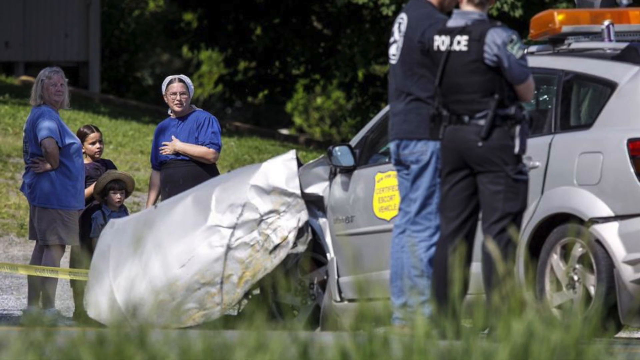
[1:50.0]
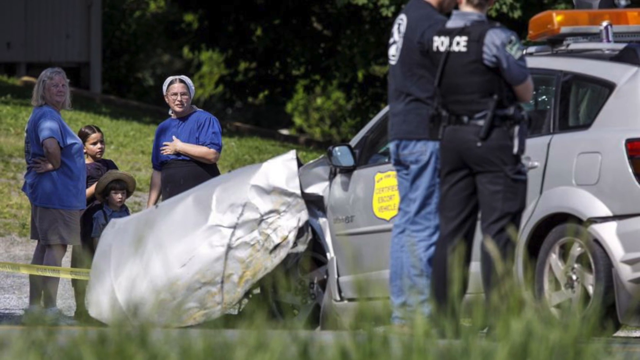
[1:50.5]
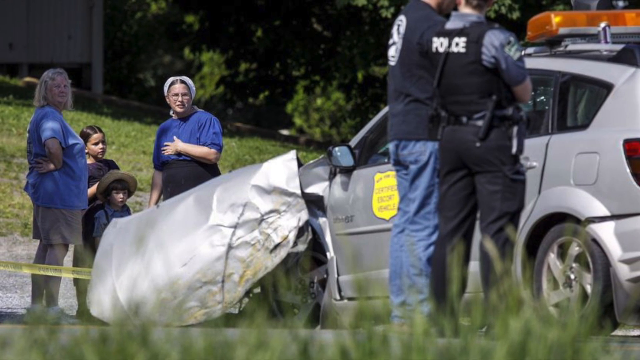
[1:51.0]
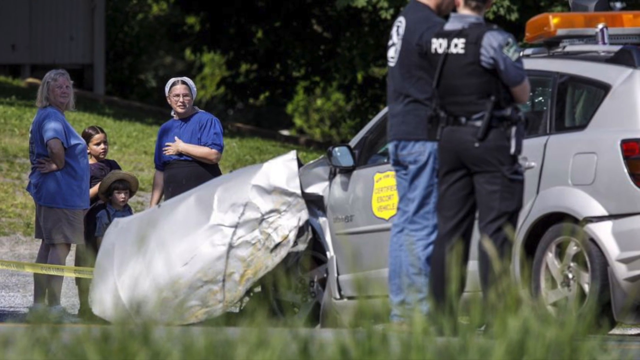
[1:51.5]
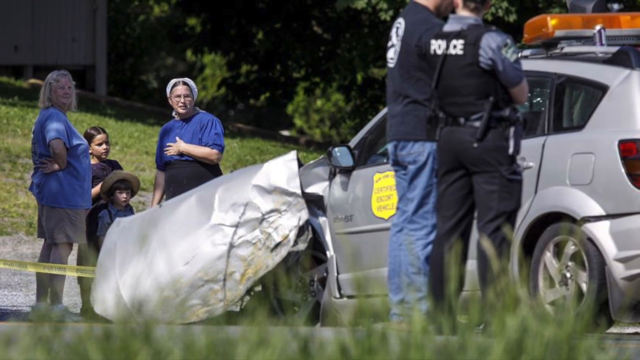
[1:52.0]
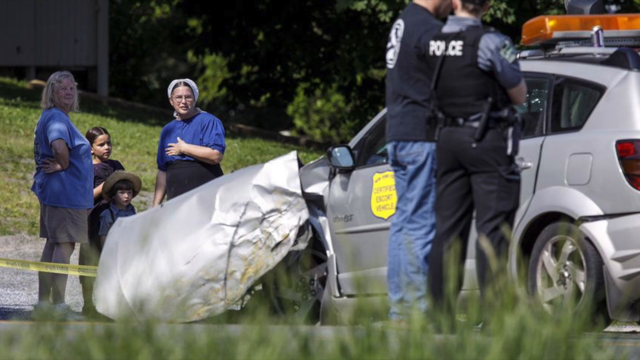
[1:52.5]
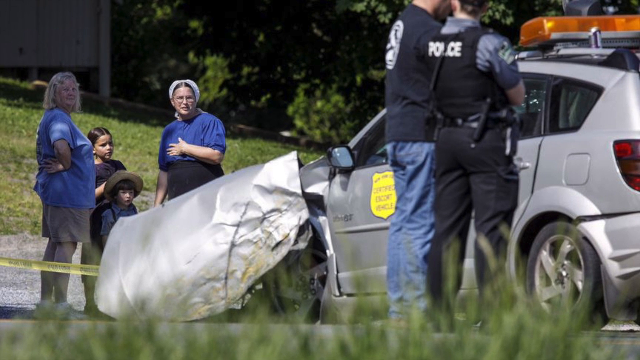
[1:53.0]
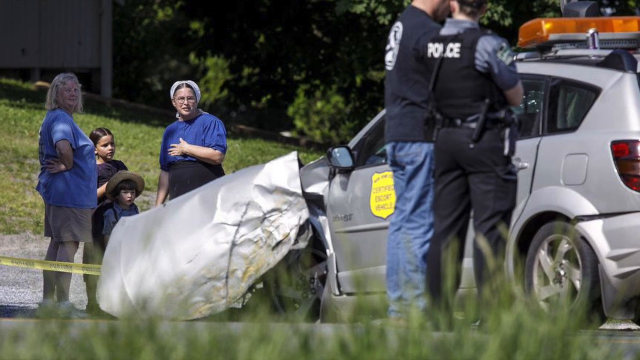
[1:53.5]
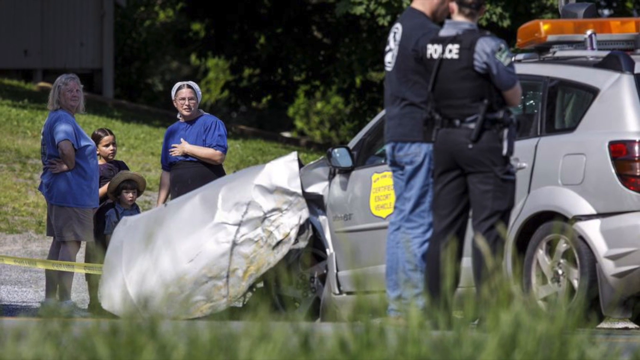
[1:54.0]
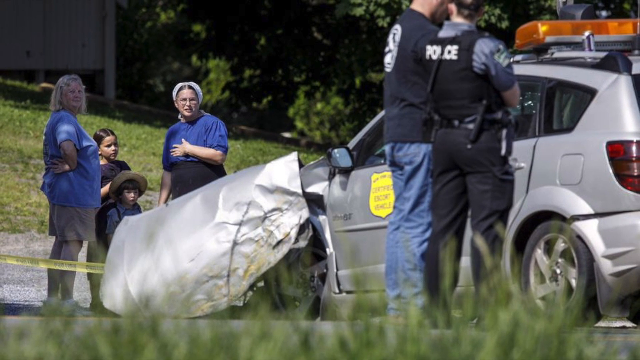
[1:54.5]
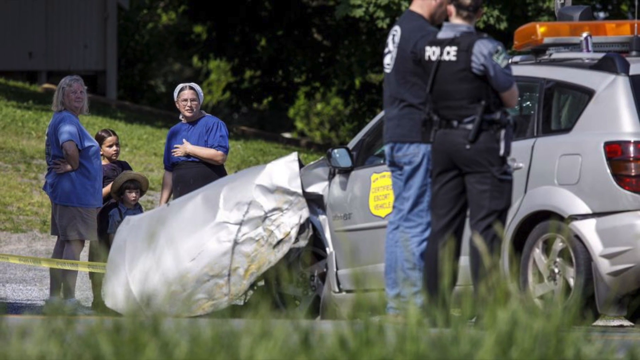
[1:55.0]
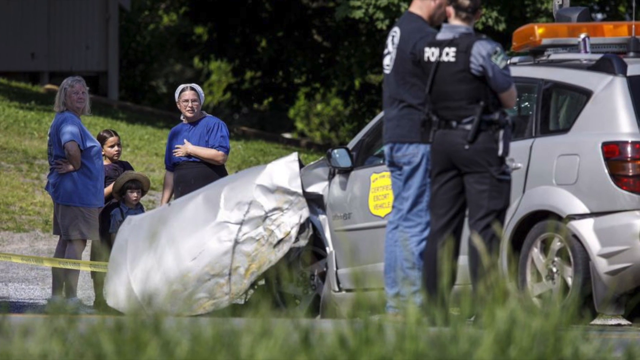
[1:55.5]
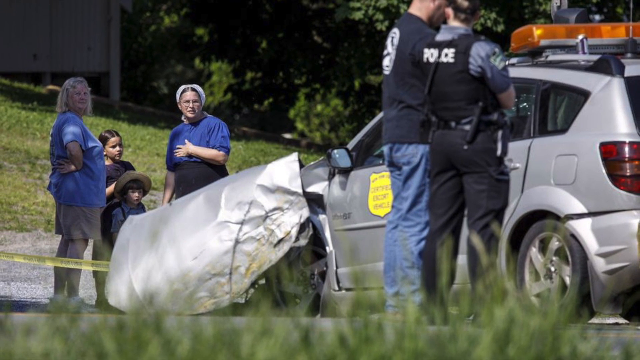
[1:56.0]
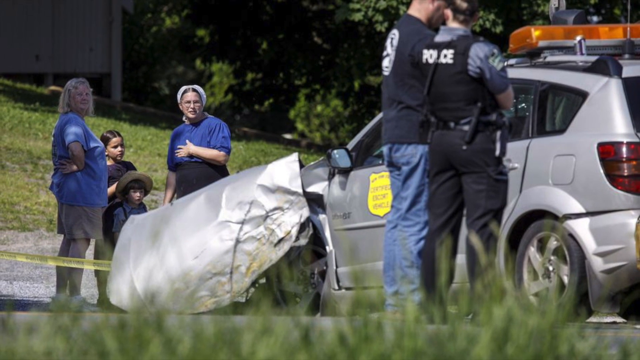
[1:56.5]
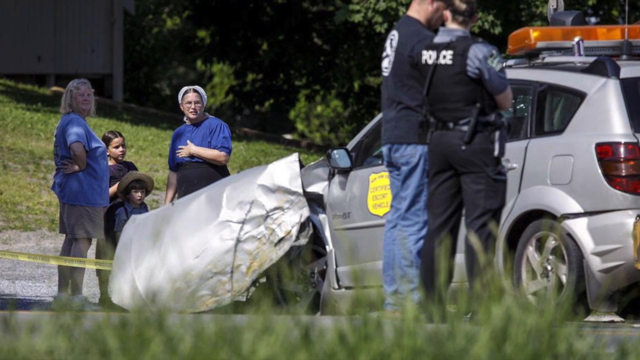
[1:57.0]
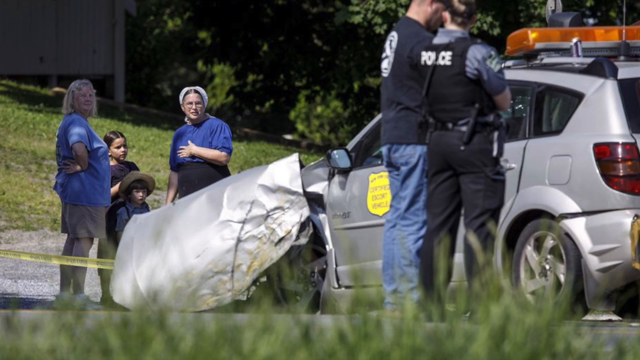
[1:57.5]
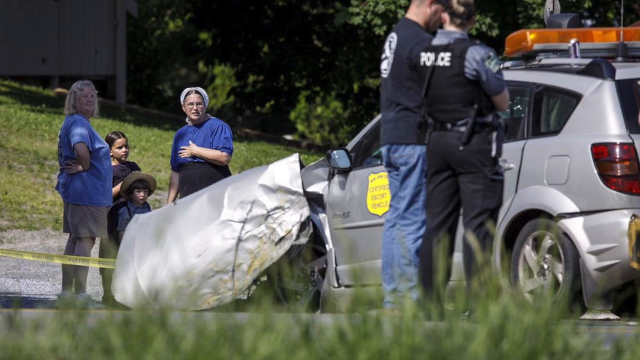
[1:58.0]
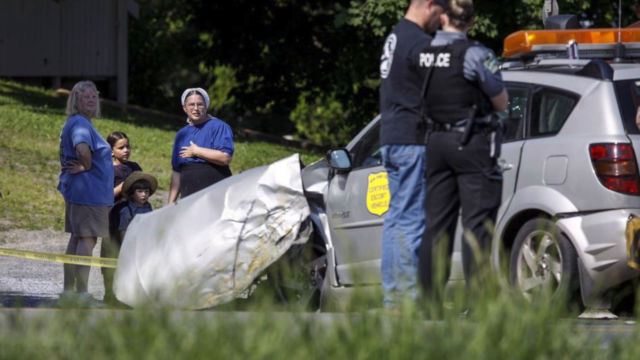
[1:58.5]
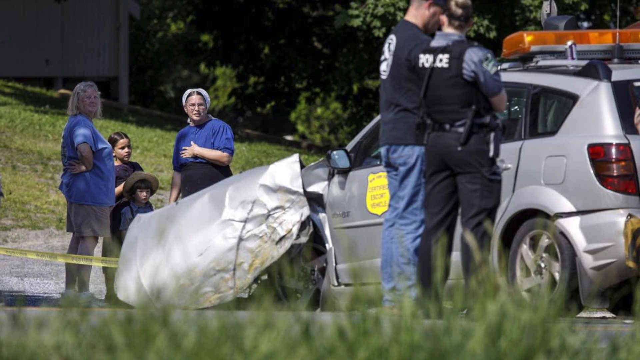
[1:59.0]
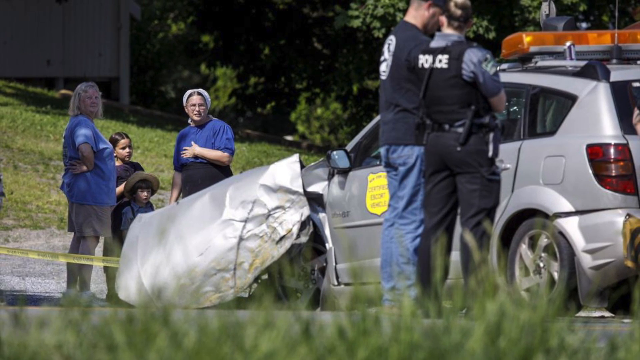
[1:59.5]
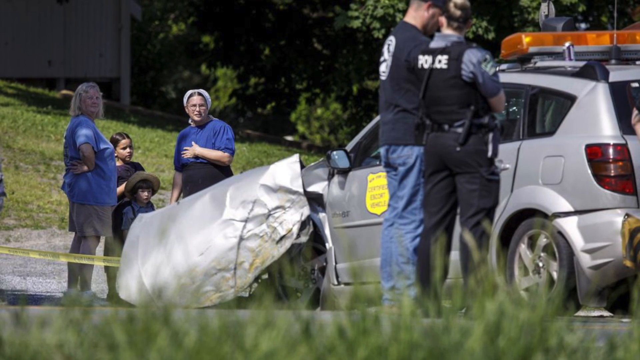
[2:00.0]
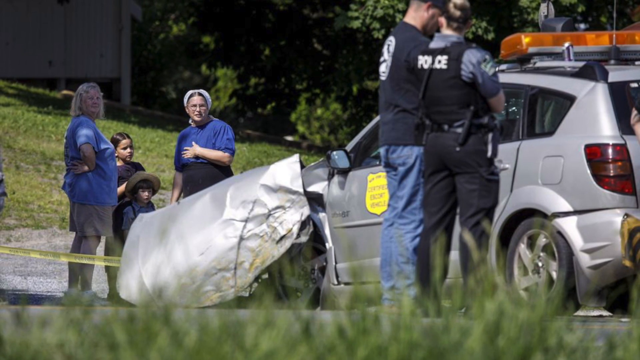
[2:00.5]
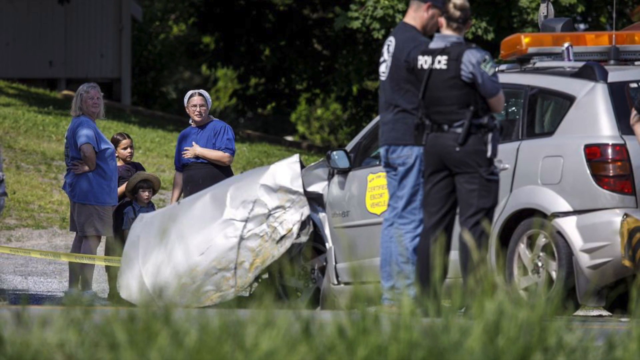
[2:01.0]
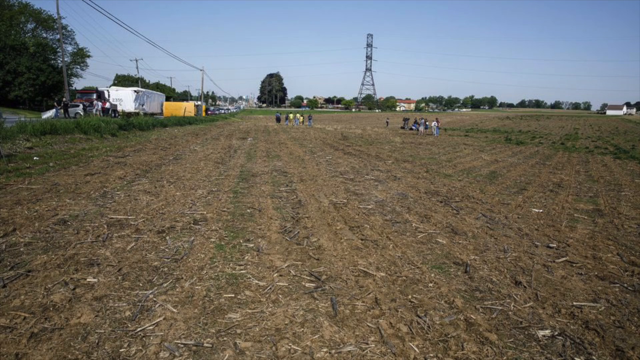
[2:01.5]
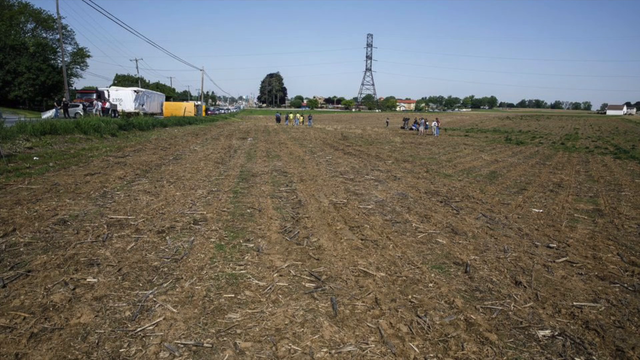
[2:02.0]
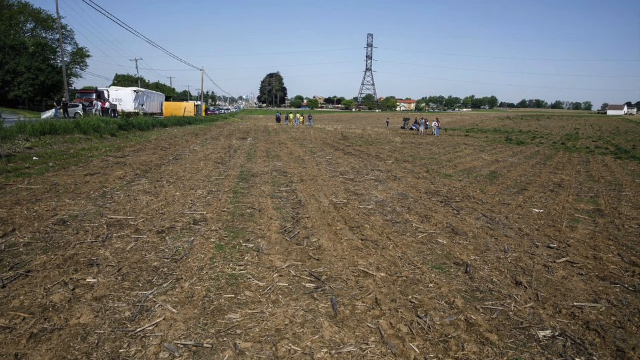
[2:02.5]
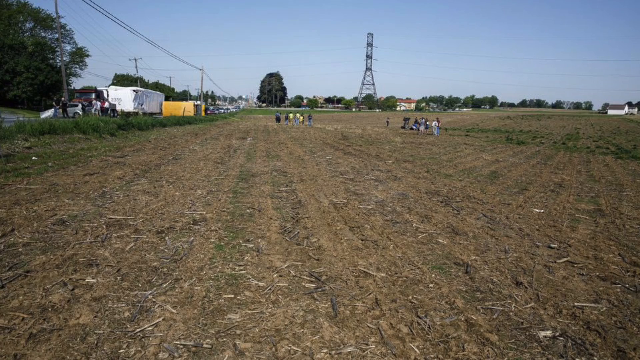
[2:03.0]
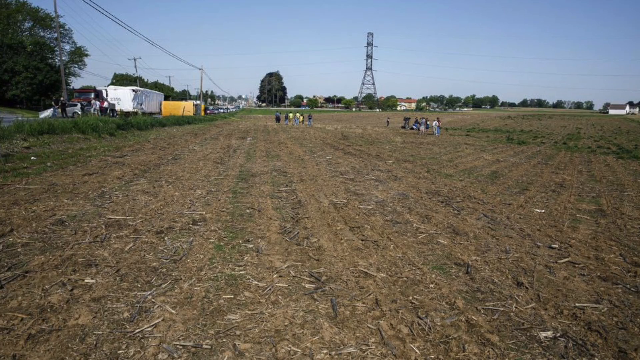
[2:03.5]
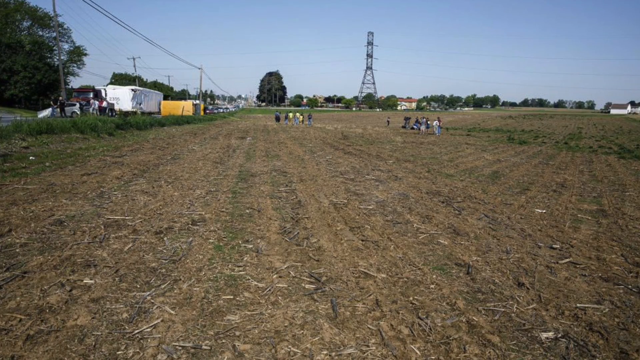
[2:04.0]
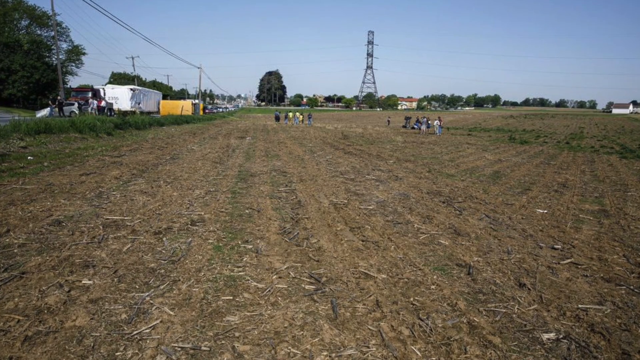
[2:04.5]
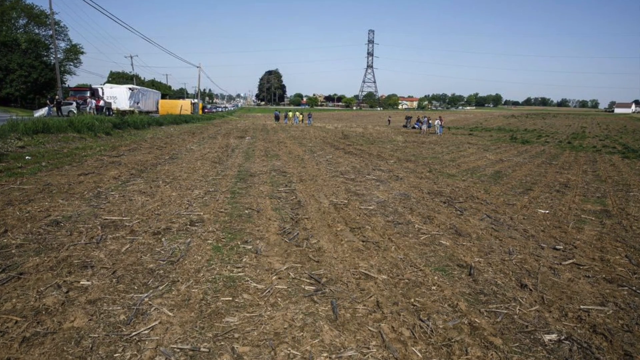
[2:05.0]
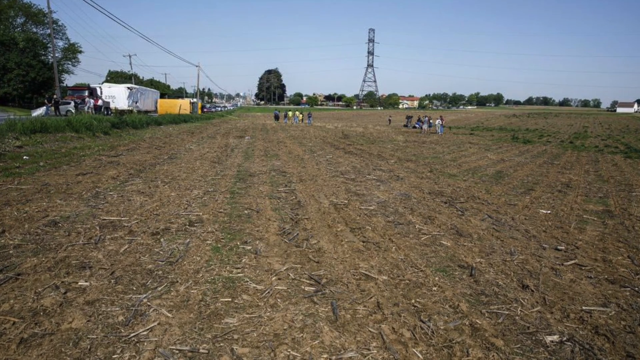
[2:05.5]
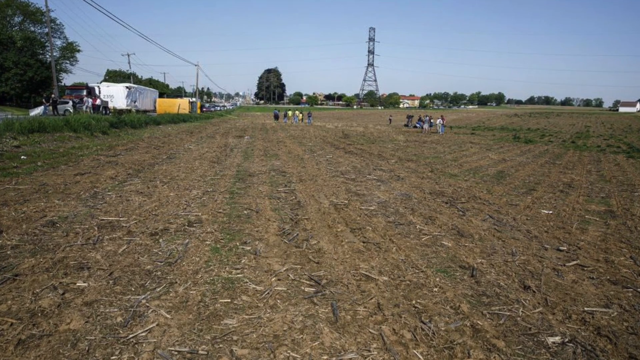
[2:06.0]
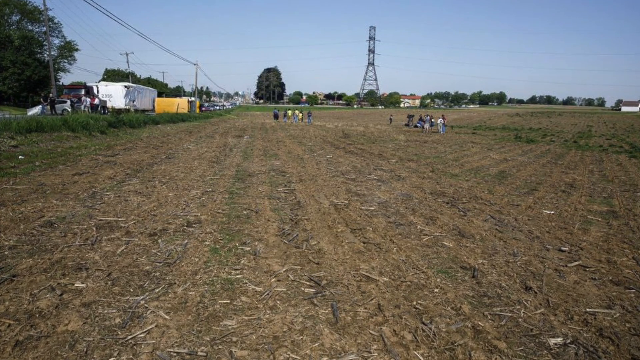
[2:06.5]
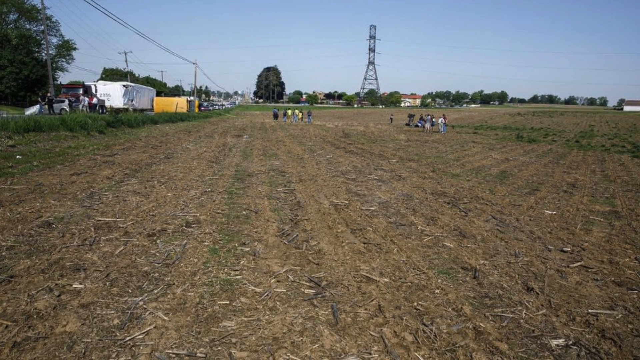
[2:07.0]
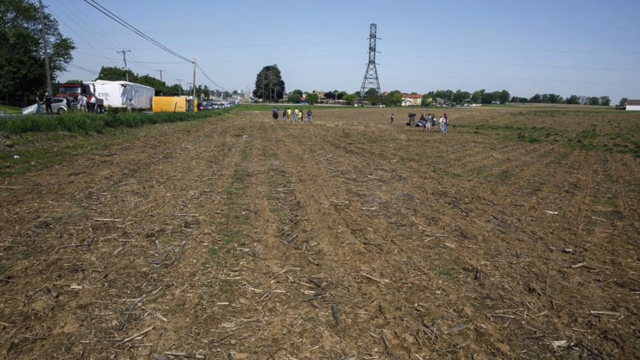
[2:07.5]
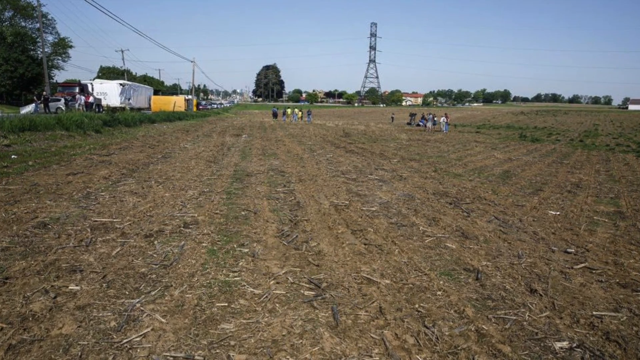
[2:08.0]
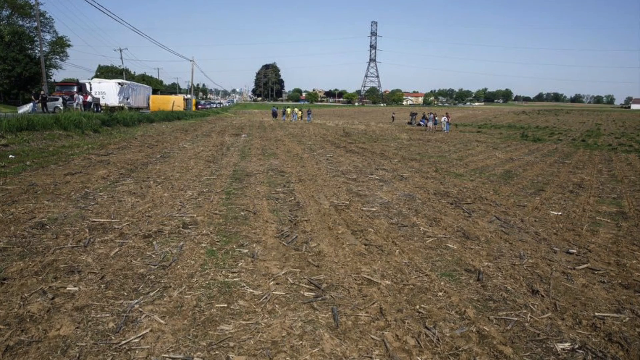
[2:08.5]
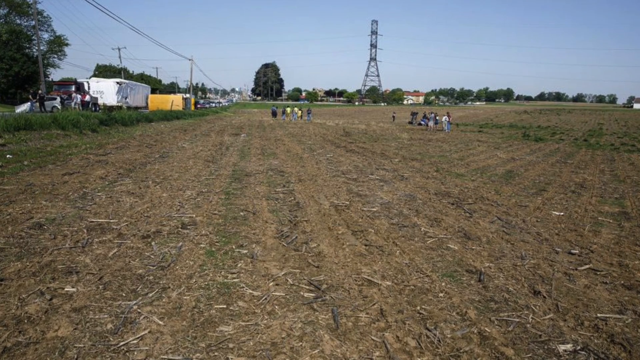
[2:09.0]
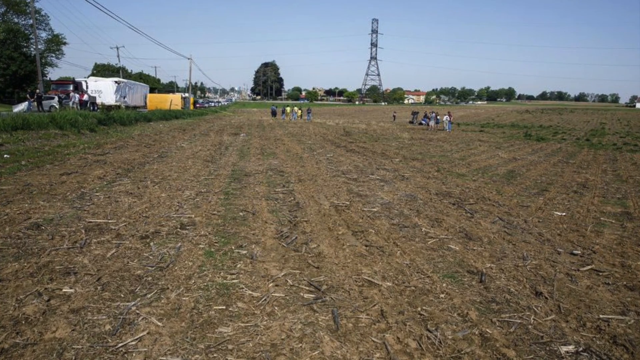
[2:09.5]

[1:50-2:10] Three people, two adults in blue shirts and a child in a black shirt, stand in front of the damaged silver vehicle, which has a yellow badge painted on the door. A policeman and another man are toward the back, on the right side of the picture. Yellow "police line do not cross" tape is also visible. The scene fades to the field from a different angle, where the overturned bus appears very small and a large power tower is in the background. Two groups of people stand in the field: one to the left, apparently civilians taking pictures, and another to the right in high-vis clothes. The field is mowed, with the mowing stopping at the very edge of the road. The school bus is far in the back, and the silver car is in the front; the people have moved, and the two women and the child are no longer in front of the car.